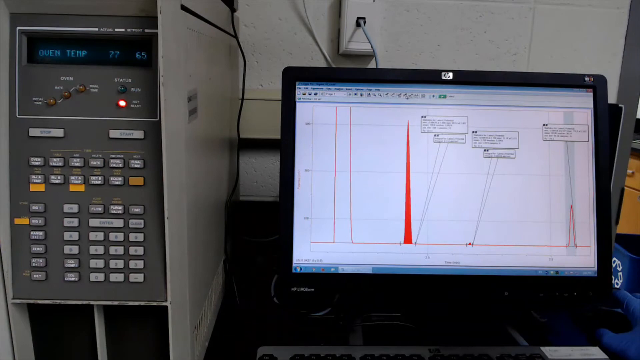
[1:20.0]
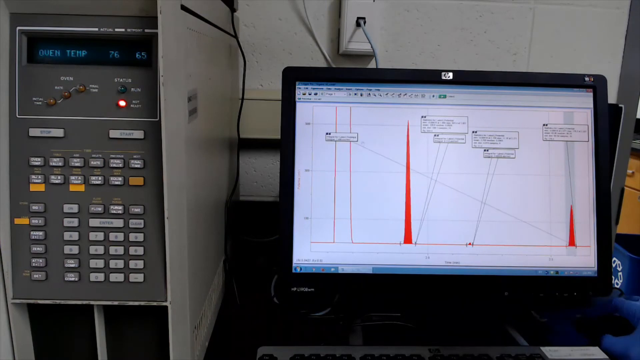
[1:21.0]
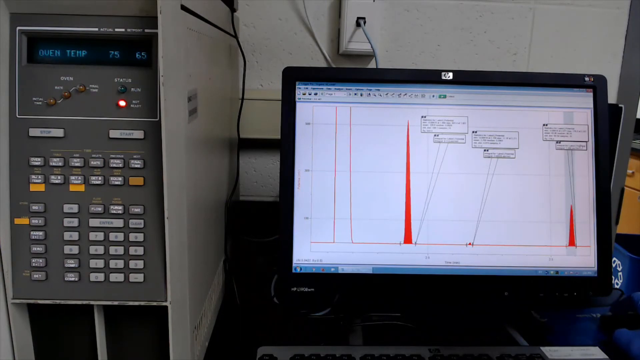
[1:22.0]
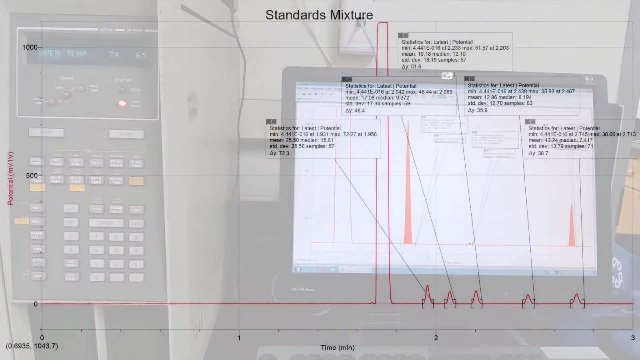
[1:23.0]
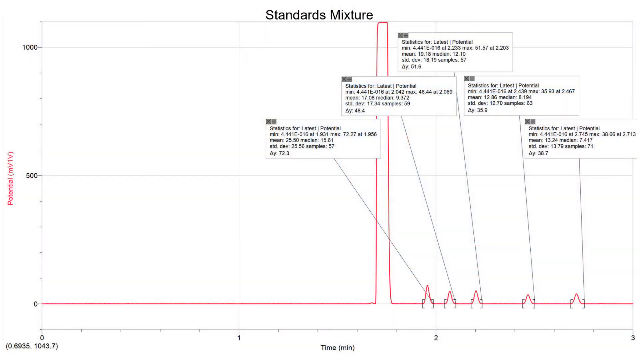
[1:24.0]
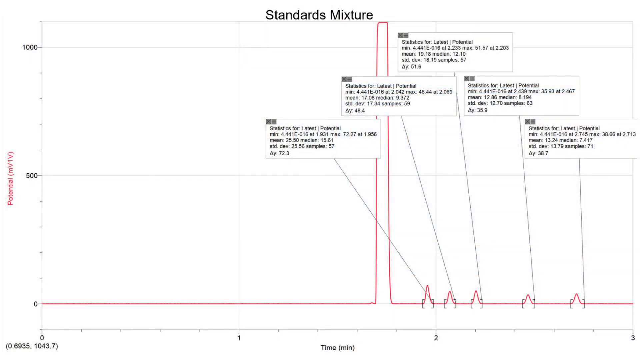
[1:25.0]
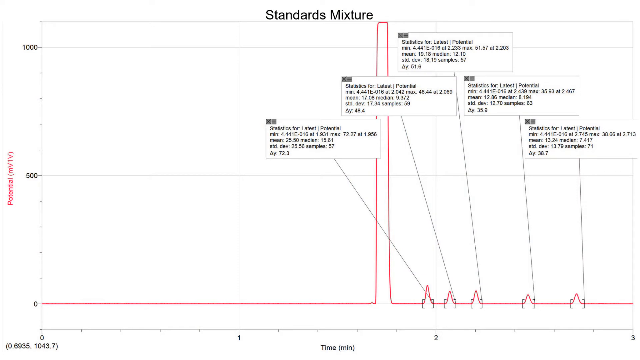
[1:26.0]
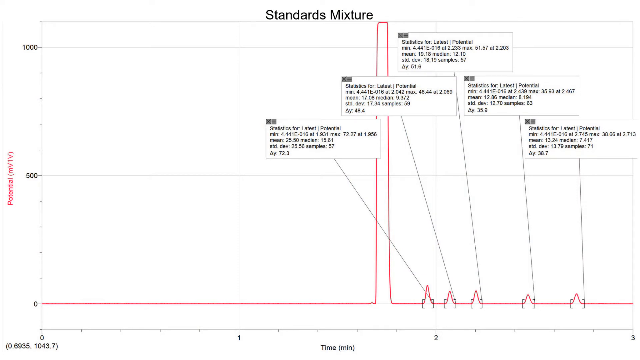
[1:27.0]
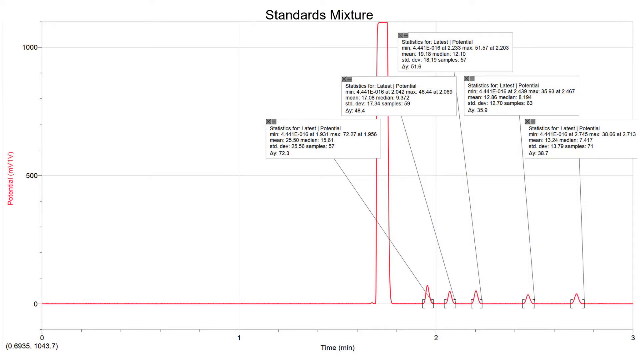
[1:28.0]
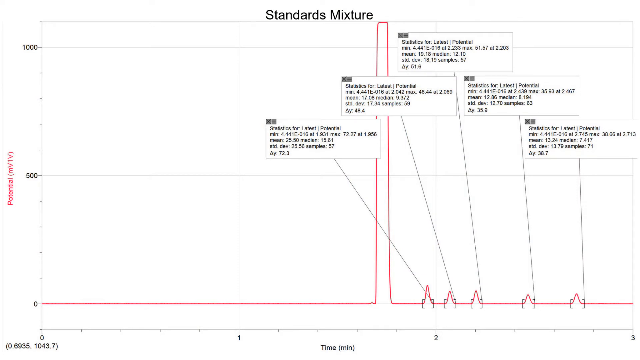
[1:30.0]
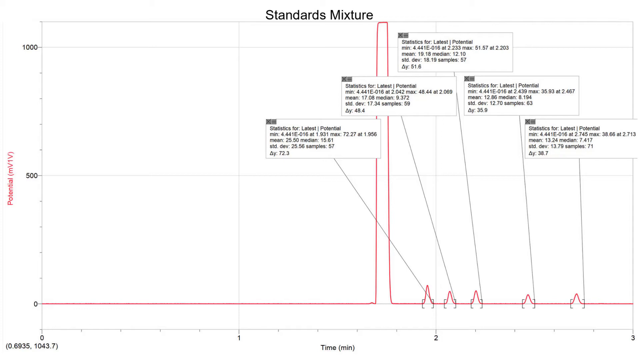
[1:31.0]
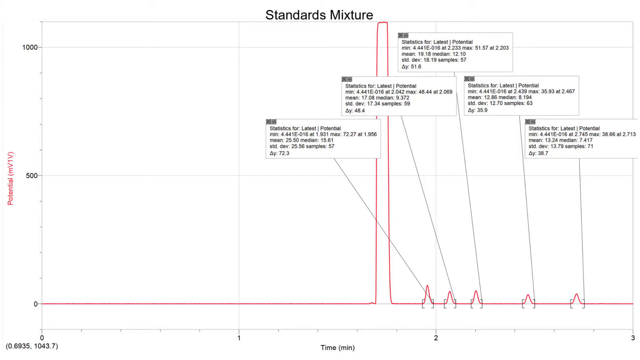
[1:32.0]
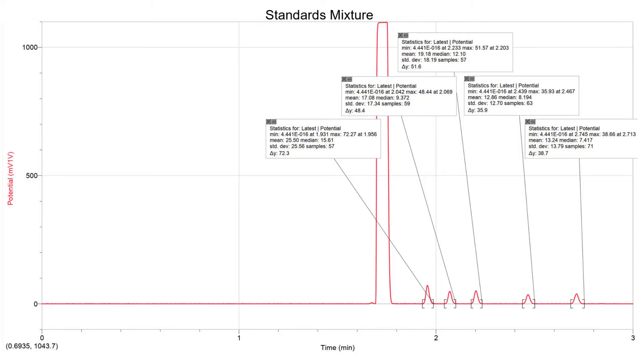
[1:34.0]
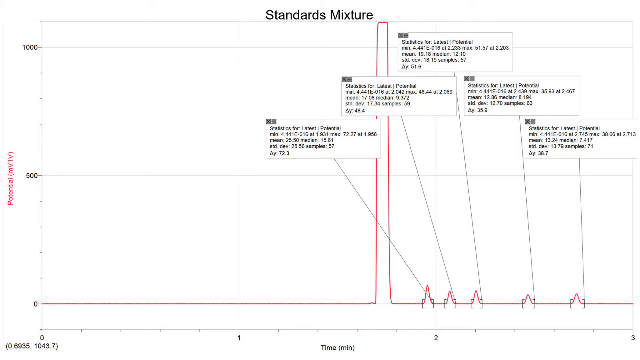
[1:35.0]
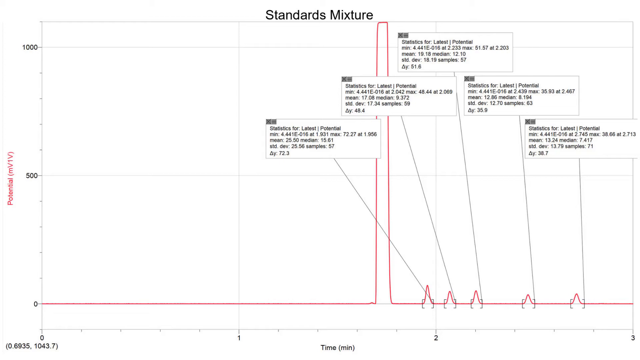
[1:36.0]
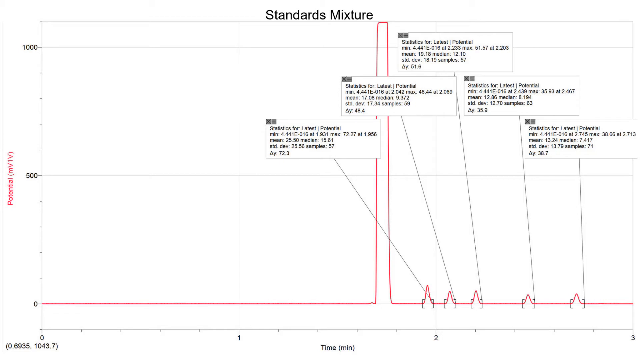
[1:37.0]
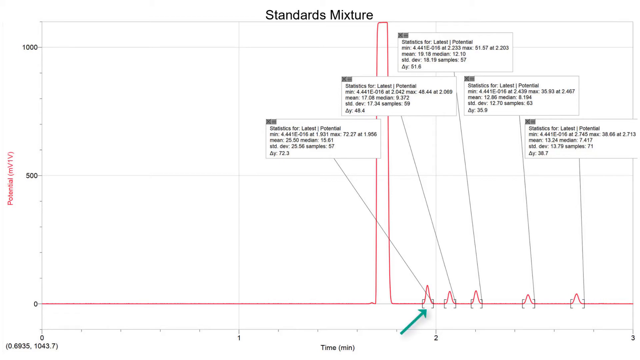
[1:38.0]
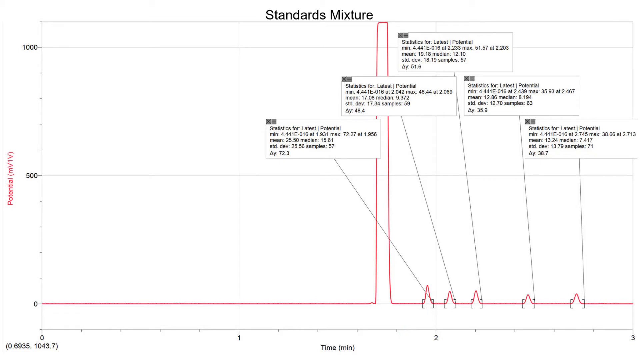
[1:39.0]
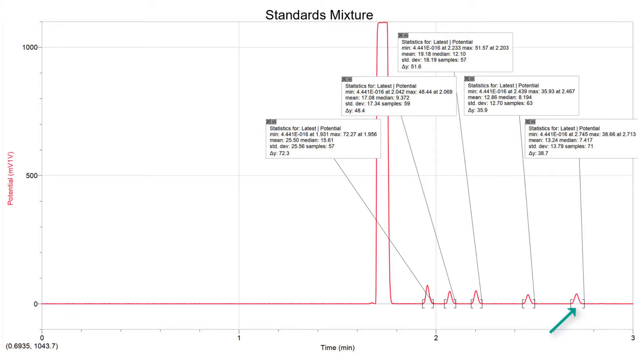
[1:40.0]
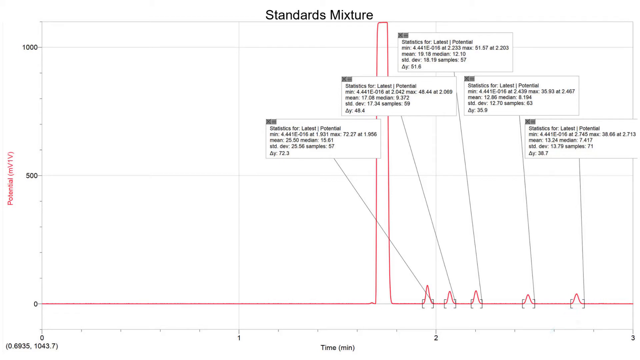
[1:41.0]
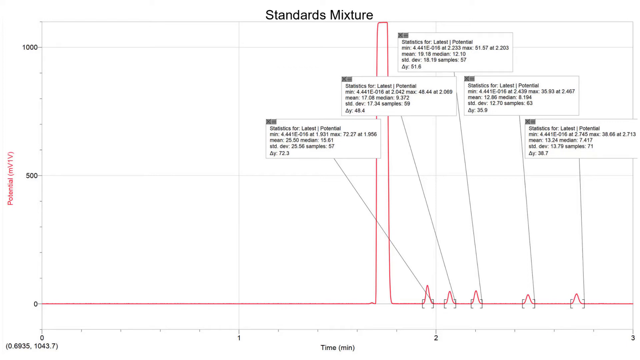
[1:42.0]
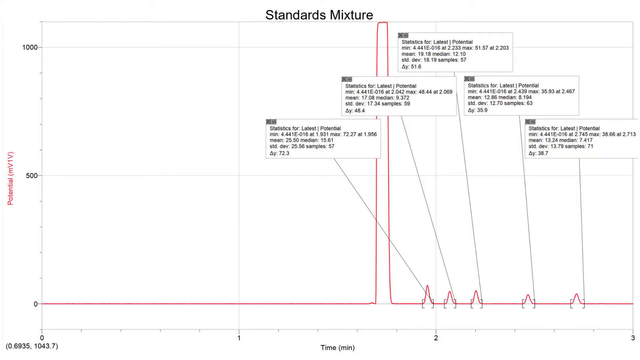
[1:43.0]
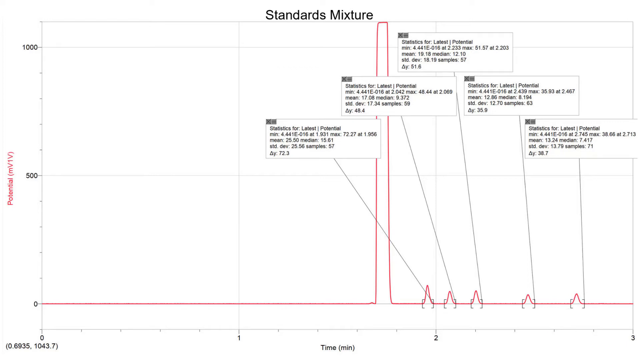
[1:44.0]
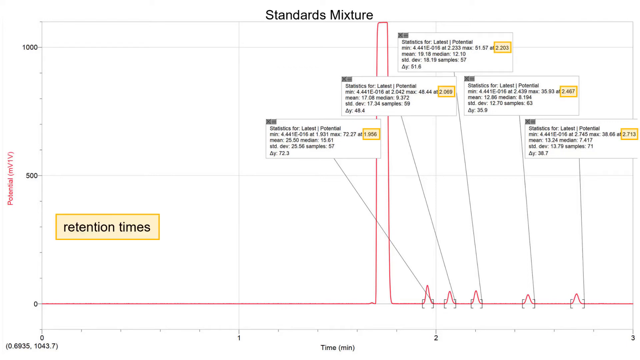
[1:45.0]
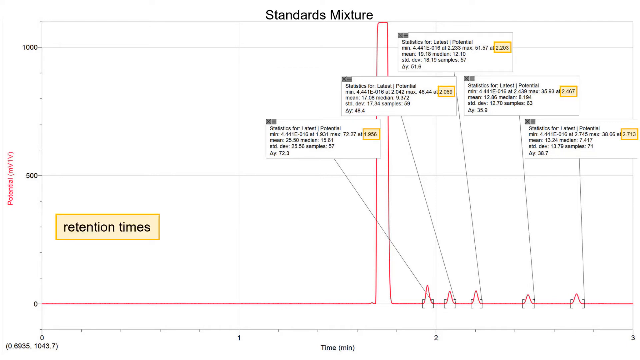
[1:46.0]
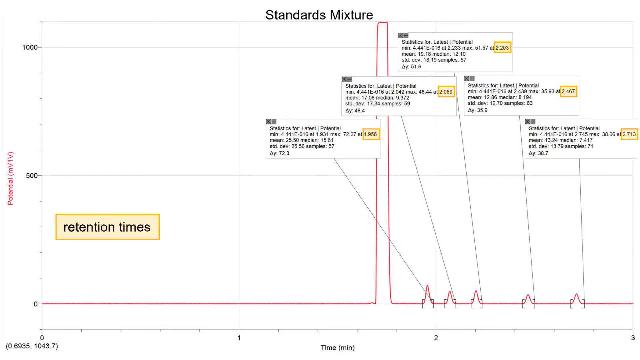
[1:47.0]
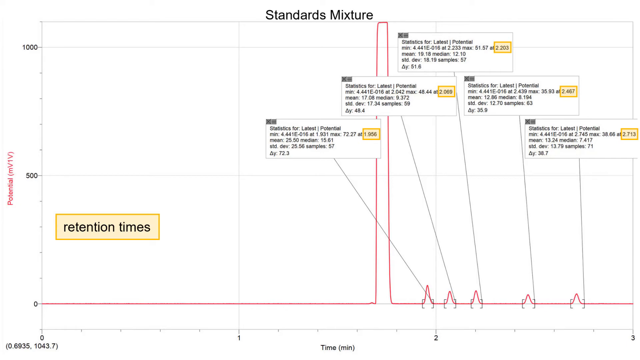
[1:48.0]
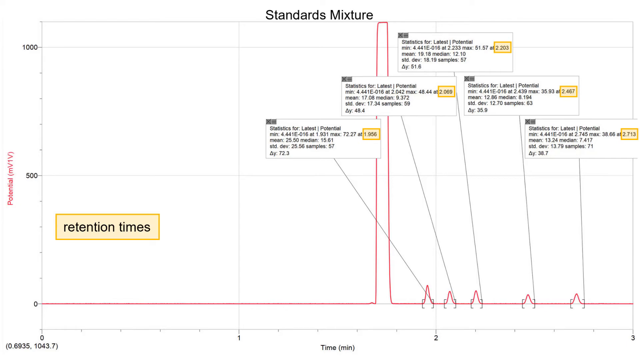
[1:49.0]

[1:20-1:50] A testing machine and a black laptop are on screen, along with results labeled with retention times and "reaction one". A hand moves and places the results in order so they can be seen.